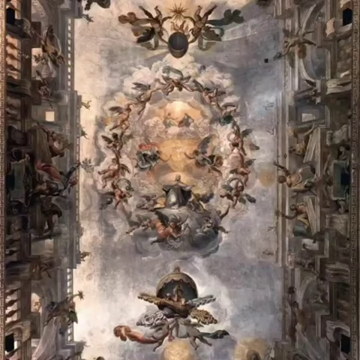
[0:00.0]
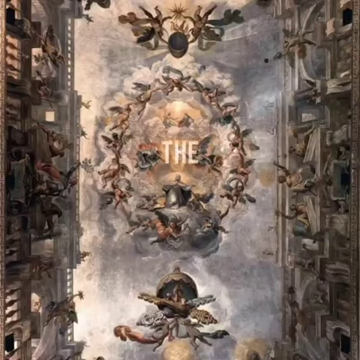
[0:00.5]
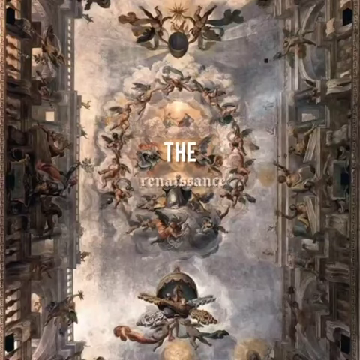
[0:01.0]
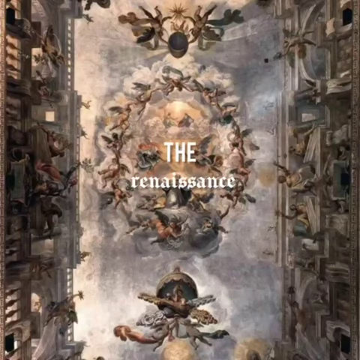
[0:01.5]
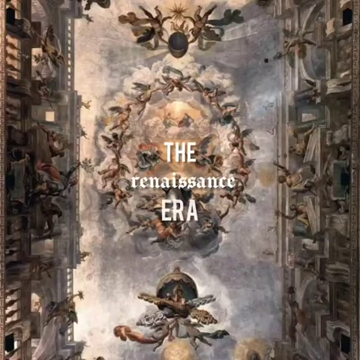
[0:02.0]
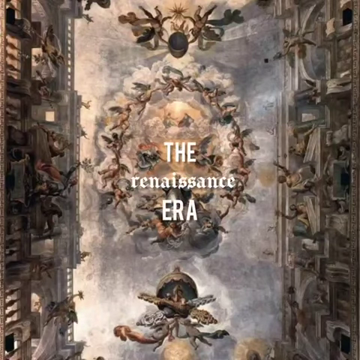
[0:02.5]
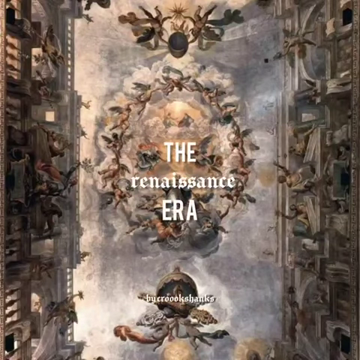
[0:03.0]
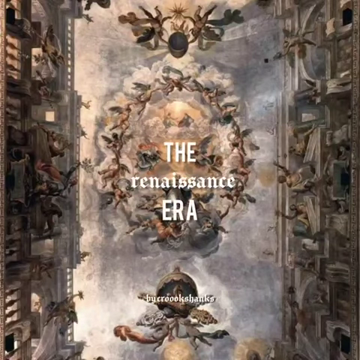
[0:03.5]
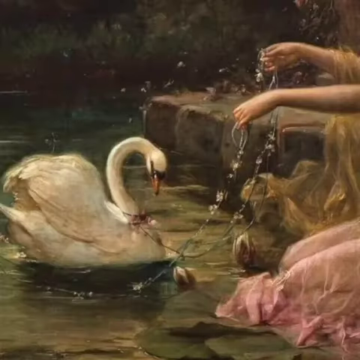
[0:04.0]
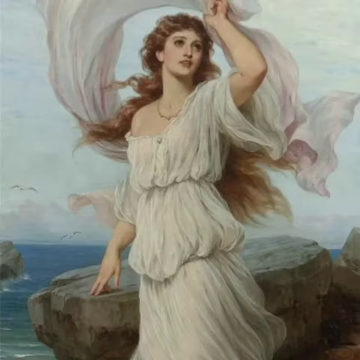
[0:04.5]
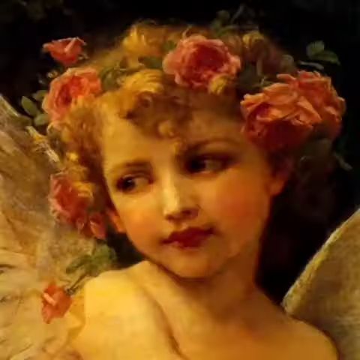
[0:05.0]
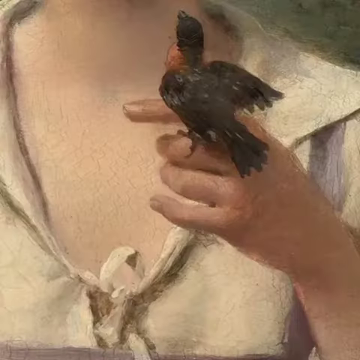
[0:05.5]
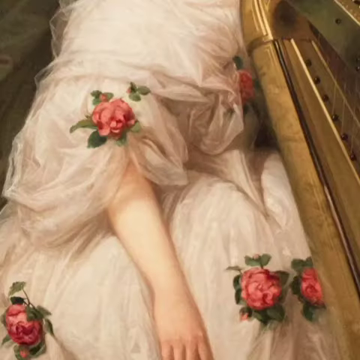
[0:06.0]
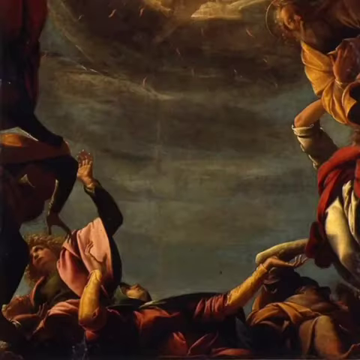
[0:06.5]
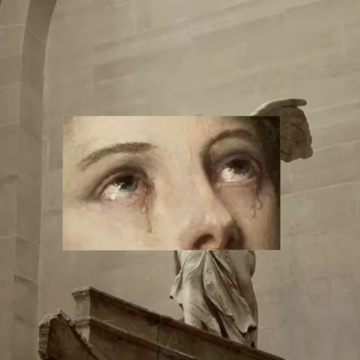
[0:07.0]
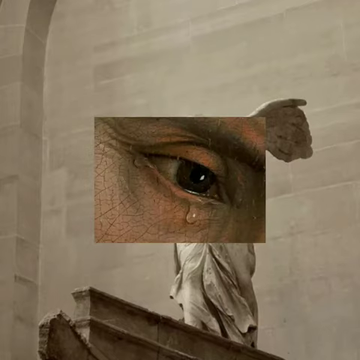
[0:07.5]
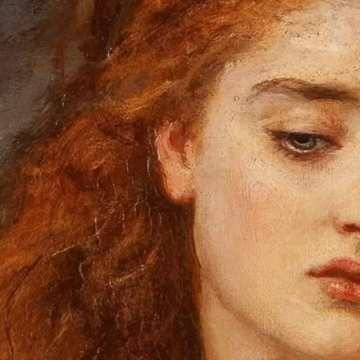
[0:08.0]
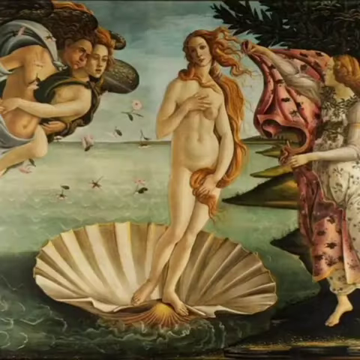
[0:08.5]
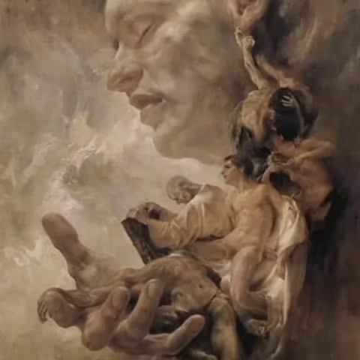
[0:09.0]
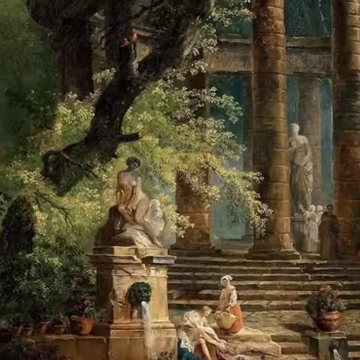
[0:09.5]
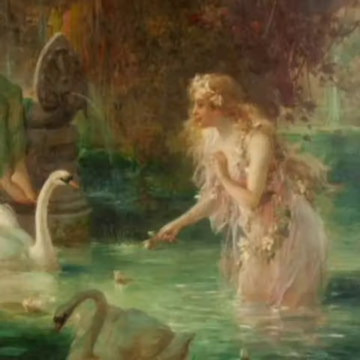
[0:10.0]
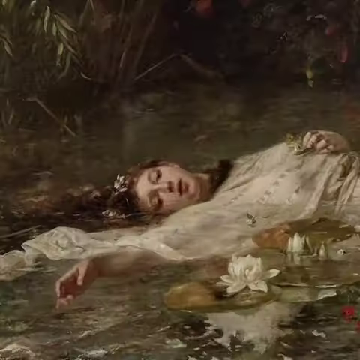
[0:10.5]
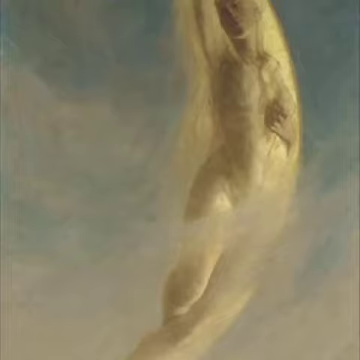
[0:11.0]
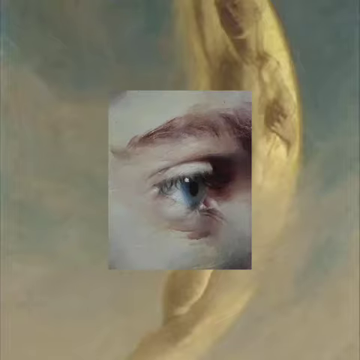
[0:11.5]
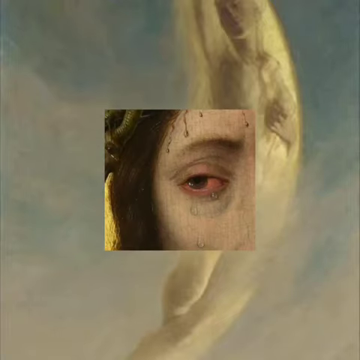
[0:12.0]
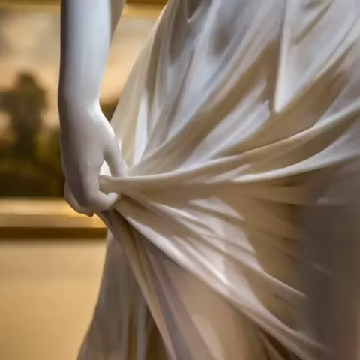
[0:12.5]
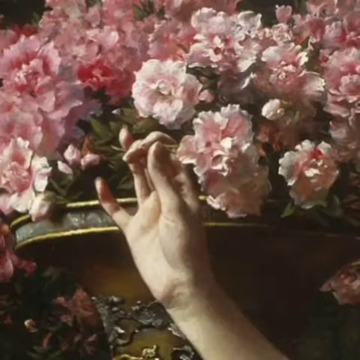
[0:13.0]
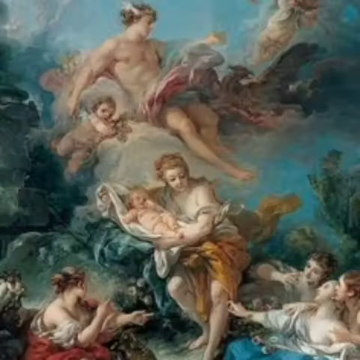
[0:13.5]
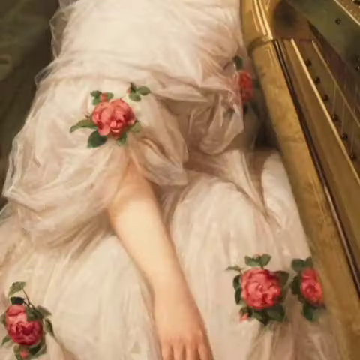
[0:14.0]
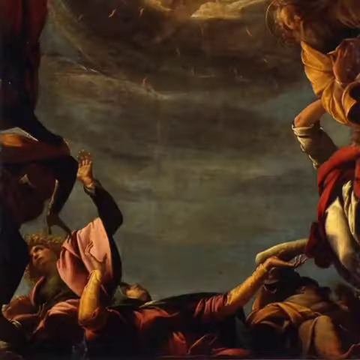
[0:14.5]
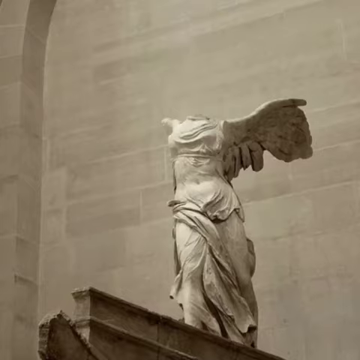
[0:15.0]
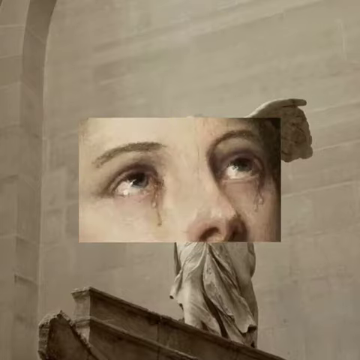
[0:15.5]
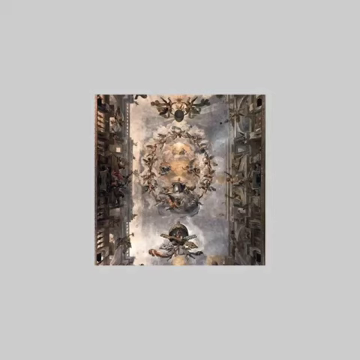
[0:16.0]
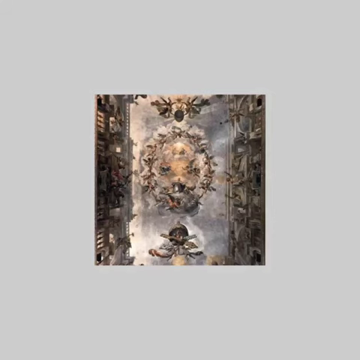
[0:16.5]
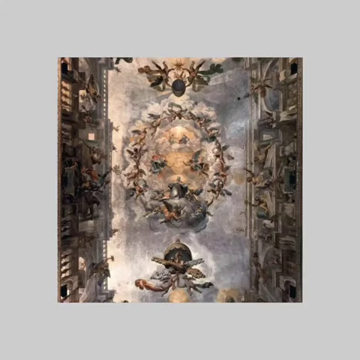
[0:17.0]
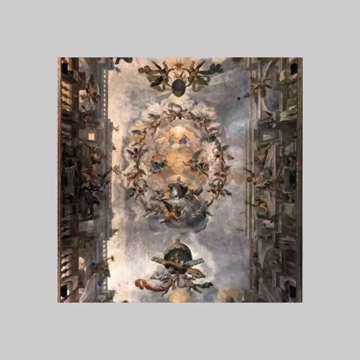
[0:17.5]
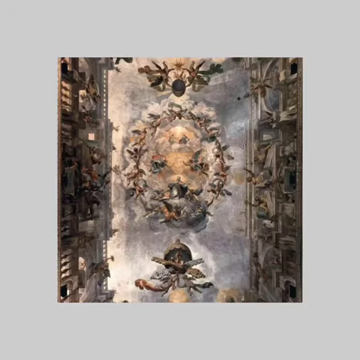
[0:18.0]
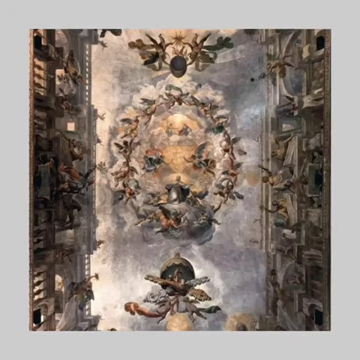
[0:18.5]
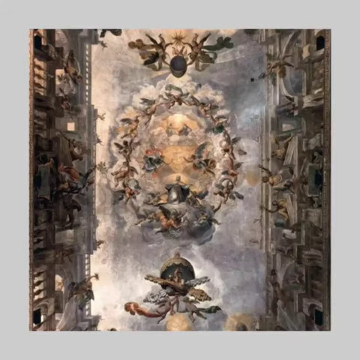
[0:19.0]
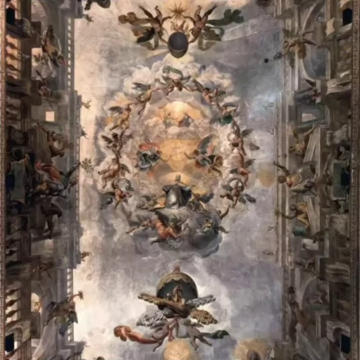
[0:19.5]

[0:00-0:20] The video opens on what appears to be a painting, possibly from the Renaissance era. It then moves quickly through different paintings: one of swans, one of angels, and one of a person in a dress. There is a picture of a carved statue with no head; it is an angel, as its wings are visible. Different pictures of people's eyes follow, many of them crying. Then comes a picture of Eve in the Garden of Eden, followed by pictures of different women, including a woman in a dress reading a Bible. Various holy pictures appear, some showing heaven and God, and one showing a woman in water. The video then switches to more eyeballs on the screen, some of them crying, then a hand holding a pink rose, then a woman's dress with a bunch of roses around it. More pictures follow, and the video switches back to the painting shown at the start.